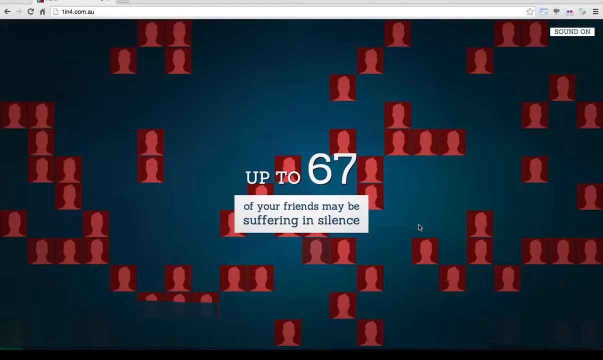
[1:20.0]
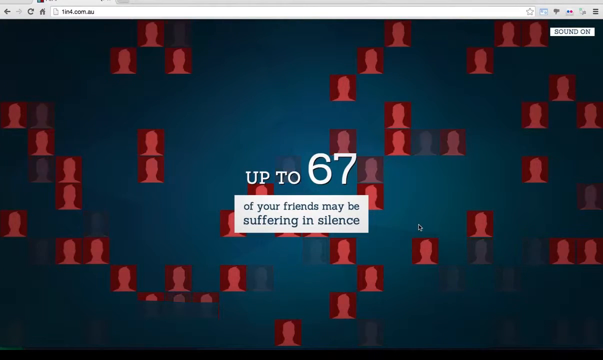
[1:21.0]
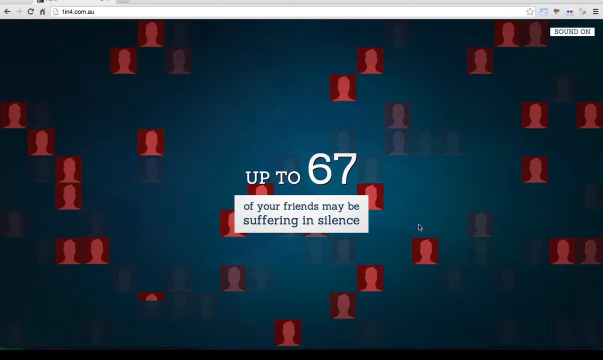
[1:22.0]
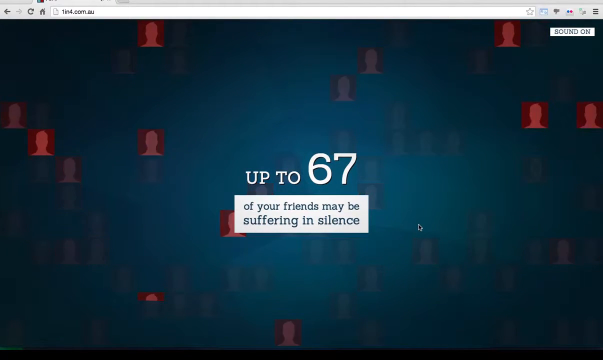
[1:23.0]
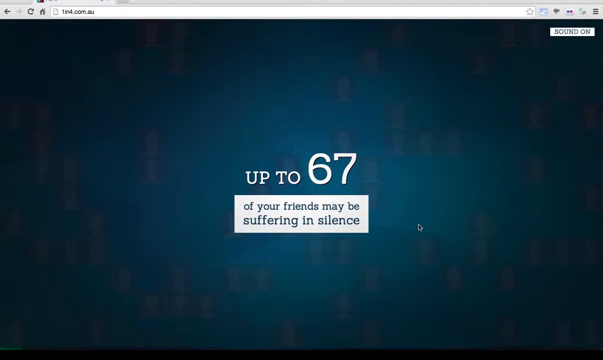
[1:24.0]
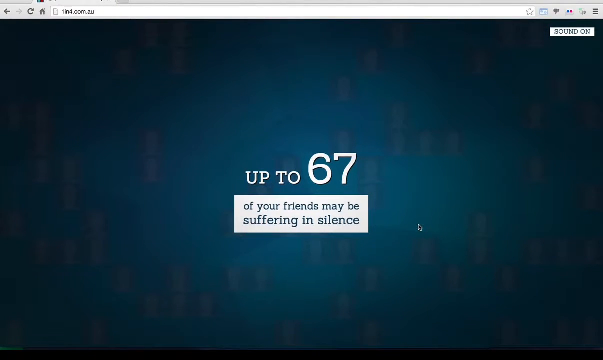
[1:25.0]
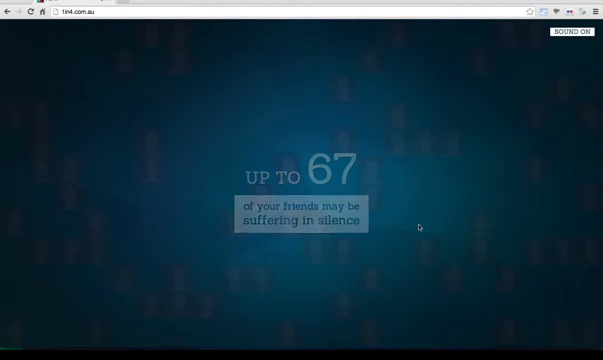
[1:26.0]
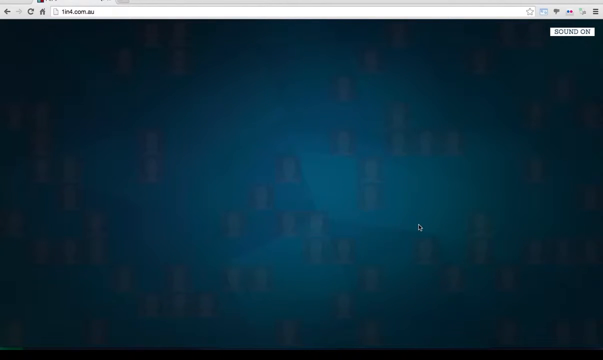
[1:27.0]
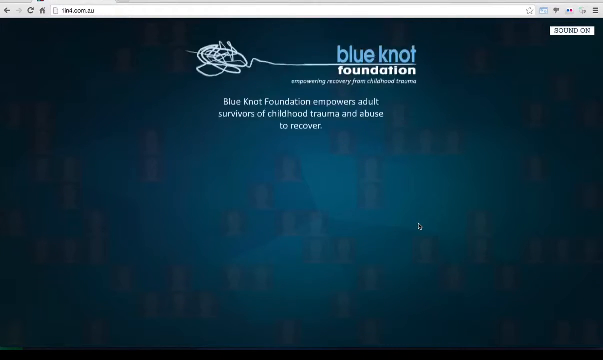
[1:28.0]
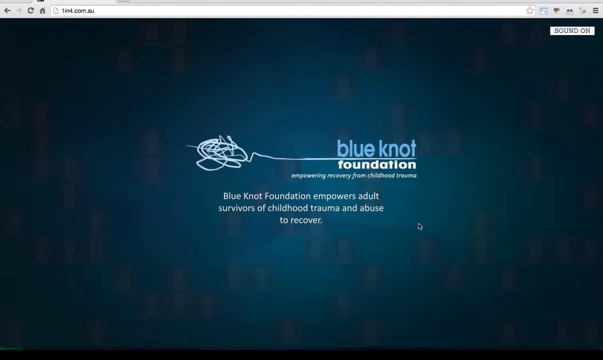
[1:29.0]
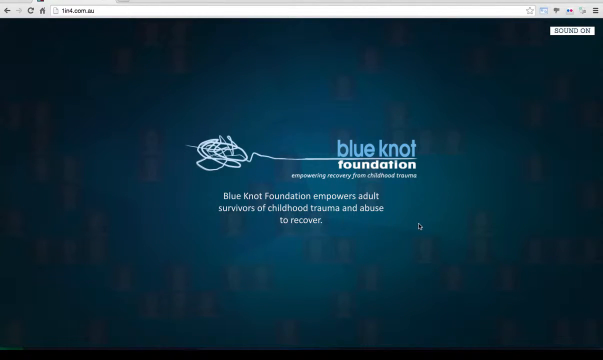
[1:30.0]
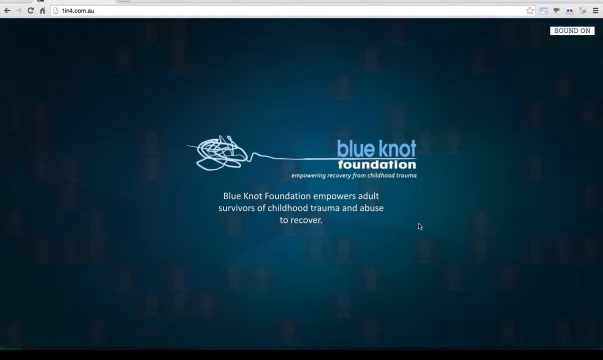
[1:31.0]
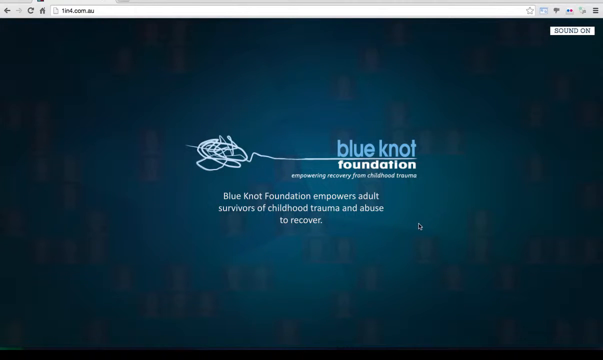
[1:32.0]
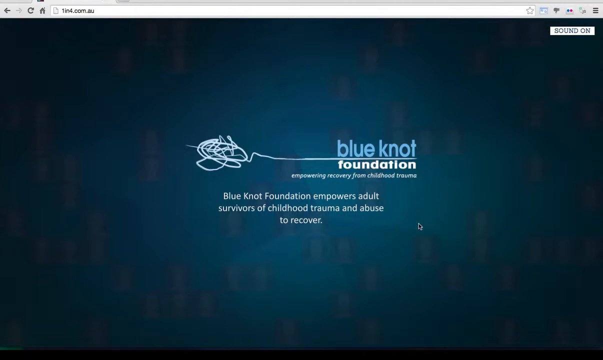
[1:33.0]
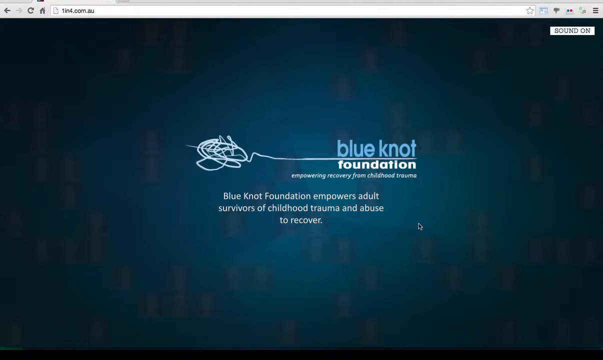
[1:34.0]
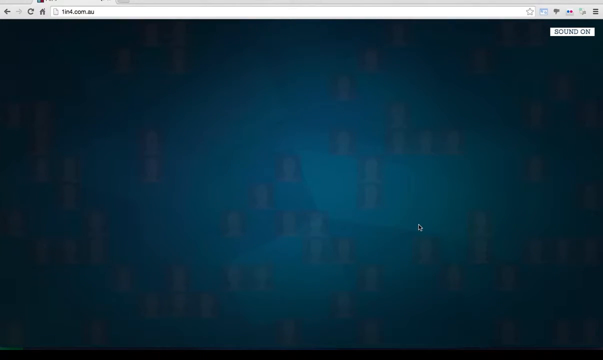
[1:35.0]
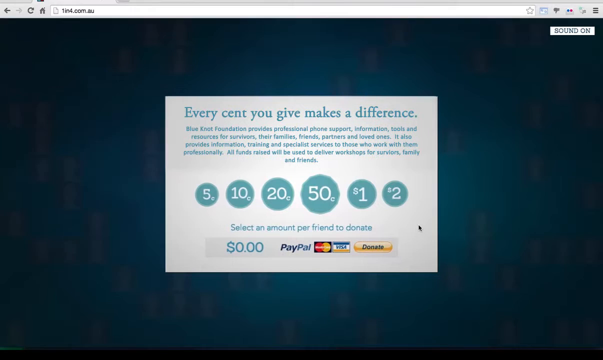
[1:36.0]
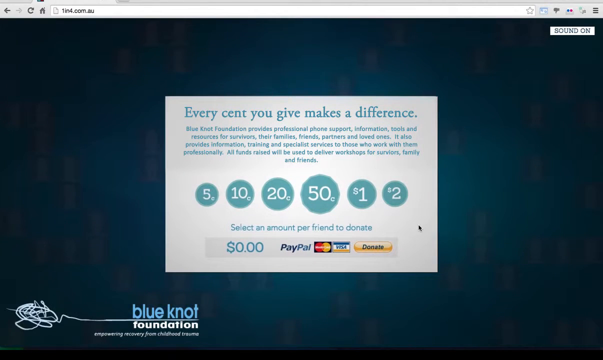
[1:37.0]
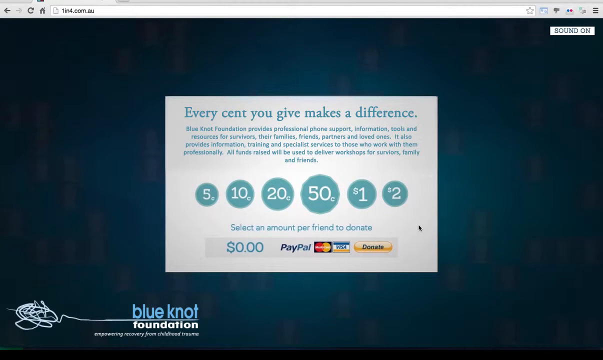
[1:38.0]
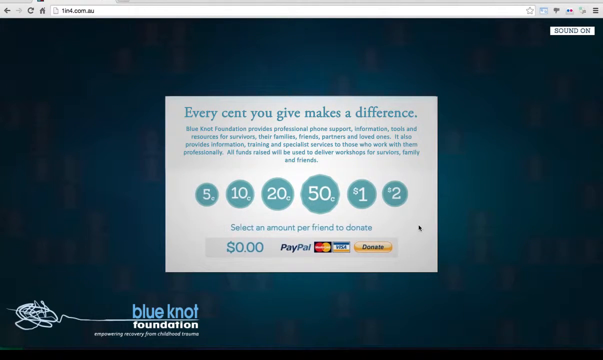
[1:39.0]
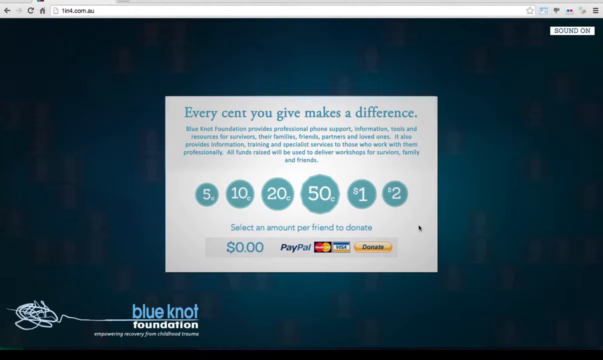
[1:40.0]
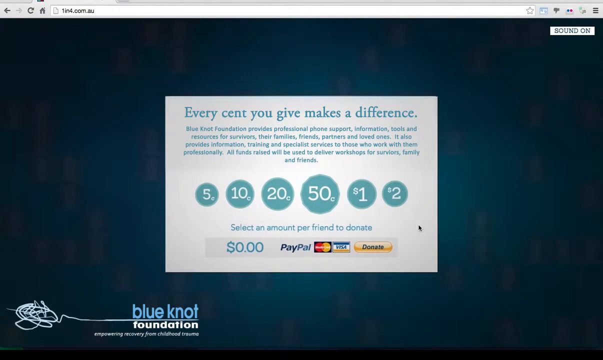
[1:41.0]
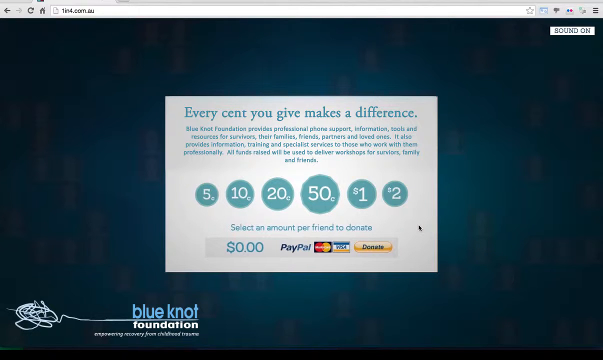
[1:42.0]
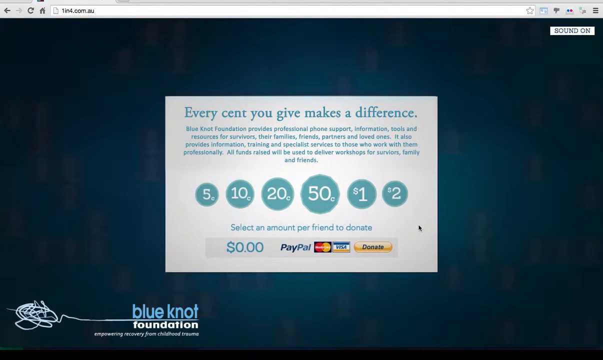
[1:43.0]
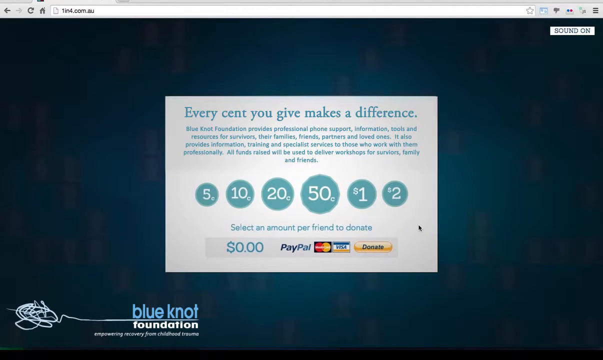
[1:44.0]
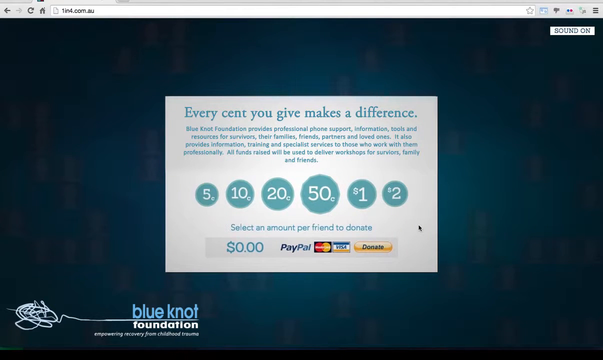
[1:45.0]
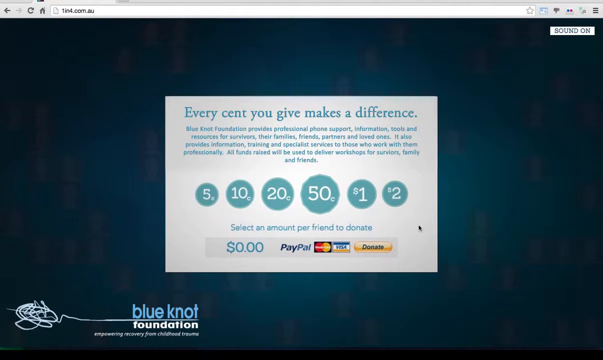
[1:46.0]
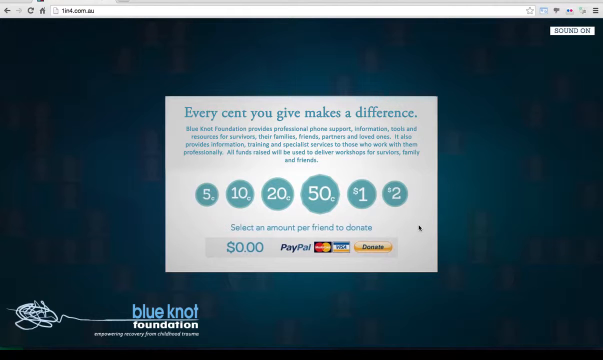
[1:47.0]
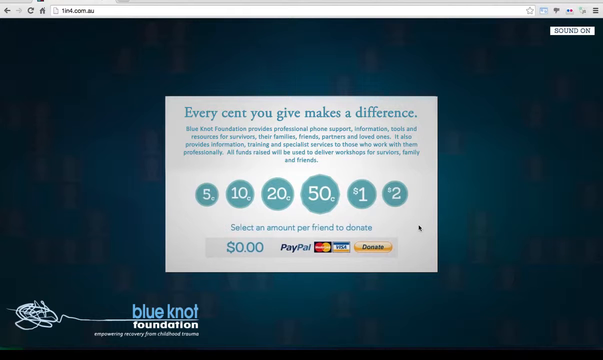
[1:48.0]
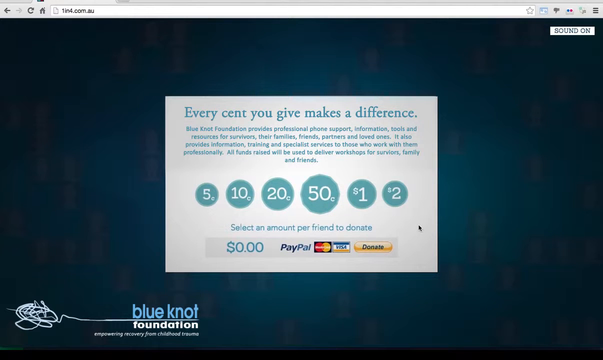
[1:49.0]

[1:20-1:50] The "67 friends may be suffering in silence" screen fades out to the logo of Blue Knot Foundation. The background is dark blue or black, "Blue Knot" is in light blue, and the rest is in a line that is kind of rainbow-colored. "Foundation" is in white letters, along with "empowering recovery from childhood trauma." White letters then read "Blue Knot Foundation empowers adult survivors of childhood trauma and abuse to recover." A request for funding follows, fading to a white sub-background reading "every cent you give make a difference," with text stating that Blue Knot Foundation provides professional phone support, information, tools and resources for survivors, their families, friends, partners and loved ones; that it also provides information, training and specialist services to those who work with them professionally; and that all funds raised will be used to deliver workshops for survivors, family and friends. Amount options of five, ten, twenty and fifty euros, or one dollar or two dollars, are offered as a select amount to donate per friend. PayPal, MasterCard and Visa are offered, and a white-and-blue donate button in the lower right corner shows a dollar amount of zero zero donated so far.